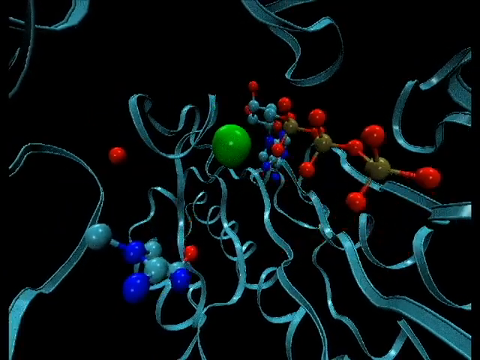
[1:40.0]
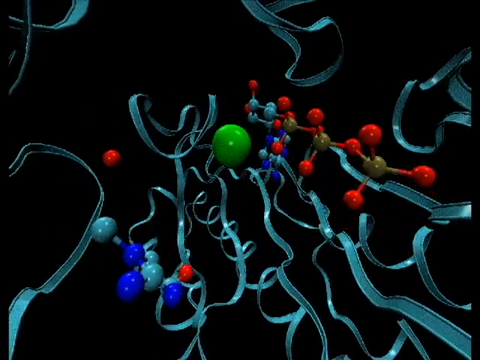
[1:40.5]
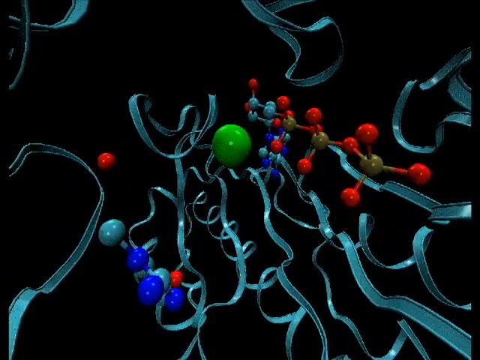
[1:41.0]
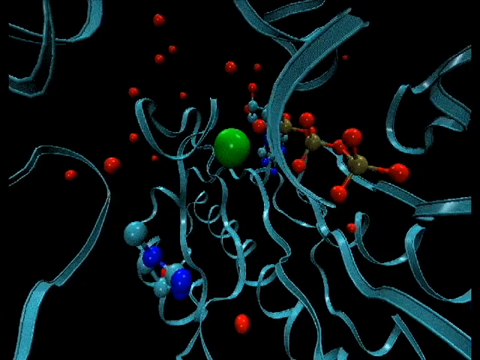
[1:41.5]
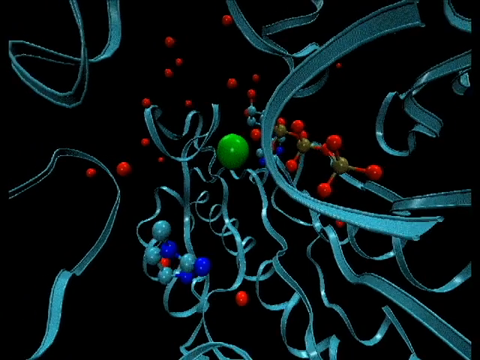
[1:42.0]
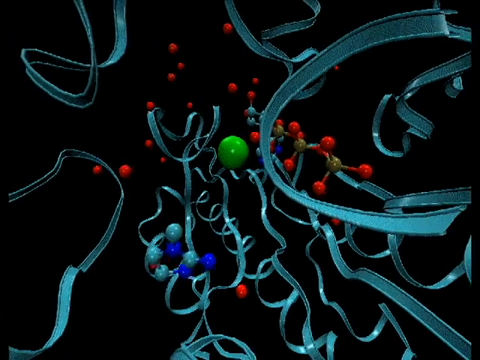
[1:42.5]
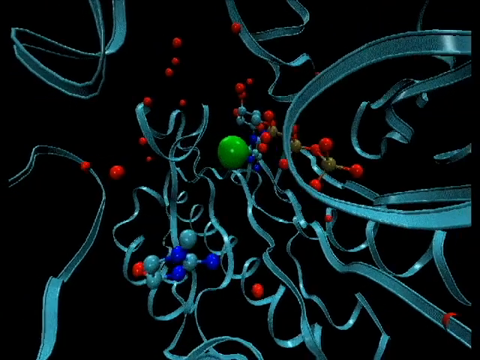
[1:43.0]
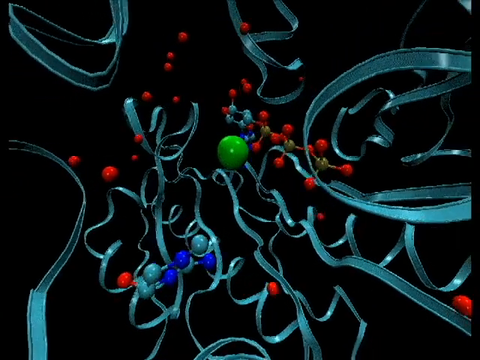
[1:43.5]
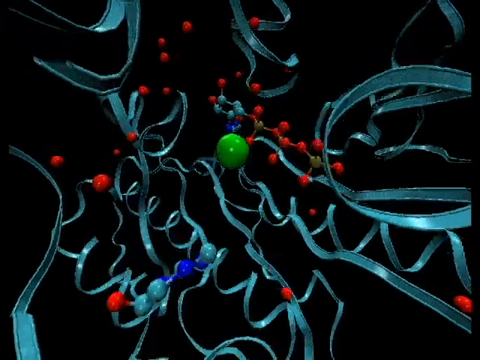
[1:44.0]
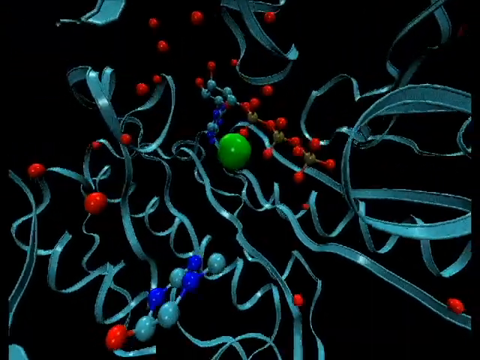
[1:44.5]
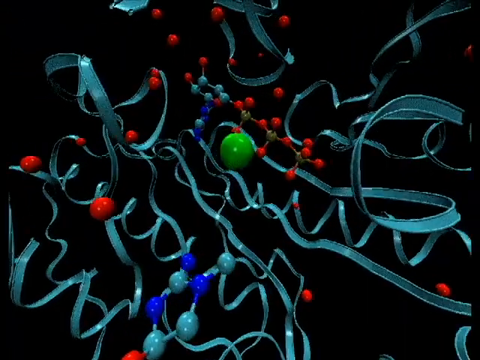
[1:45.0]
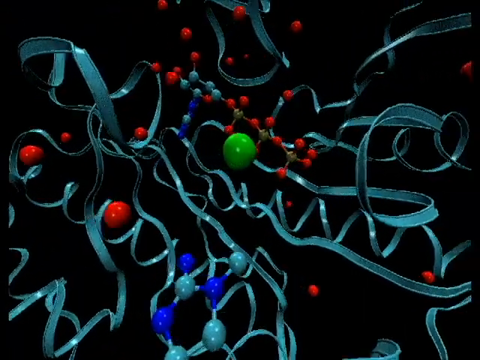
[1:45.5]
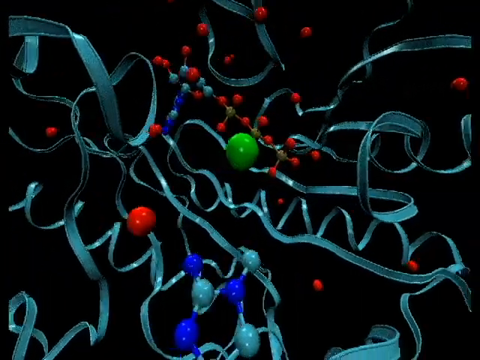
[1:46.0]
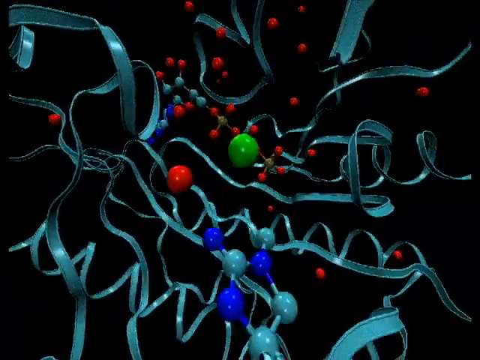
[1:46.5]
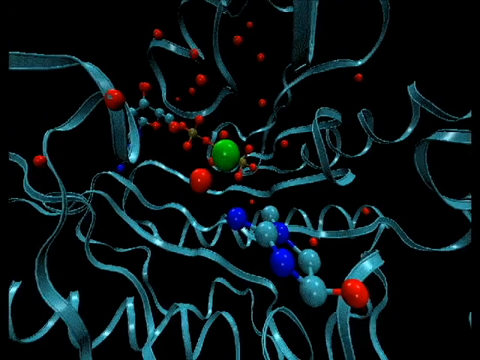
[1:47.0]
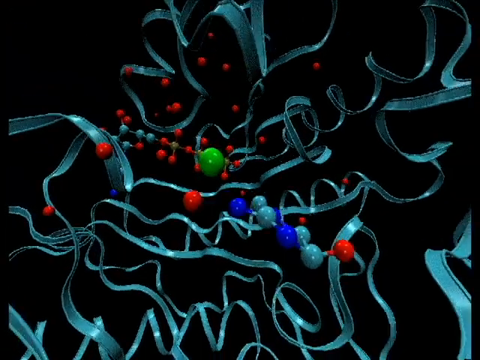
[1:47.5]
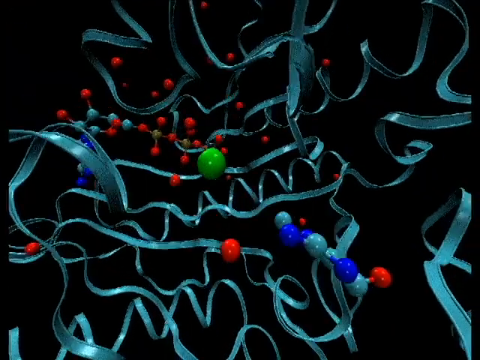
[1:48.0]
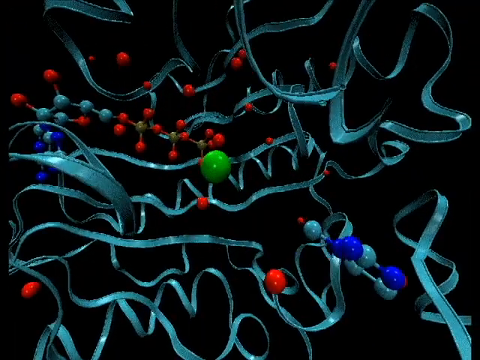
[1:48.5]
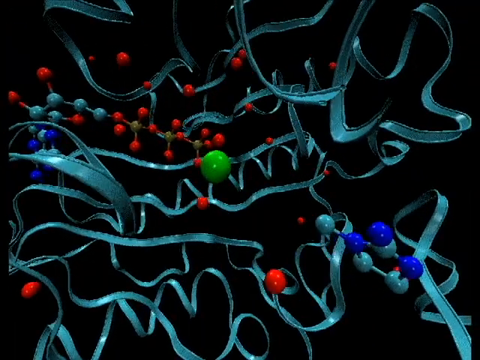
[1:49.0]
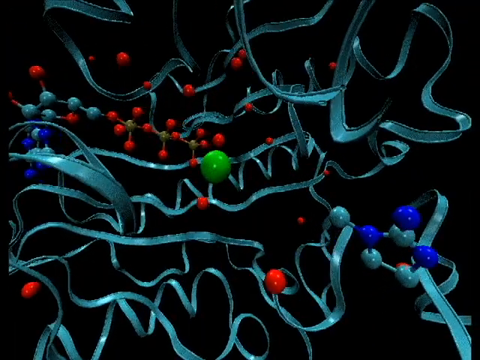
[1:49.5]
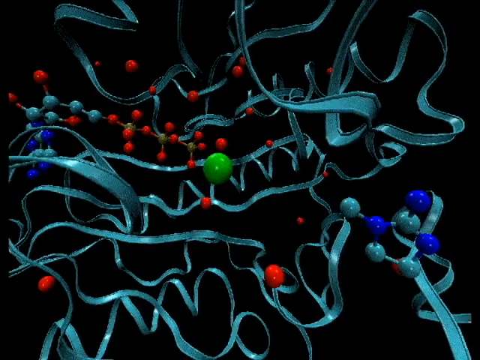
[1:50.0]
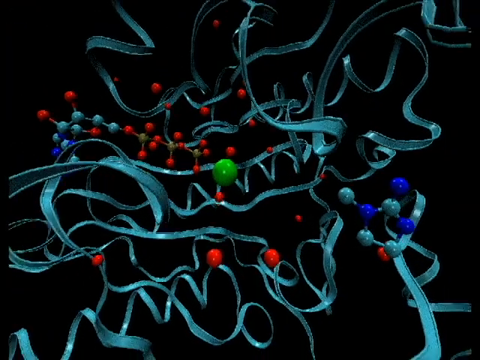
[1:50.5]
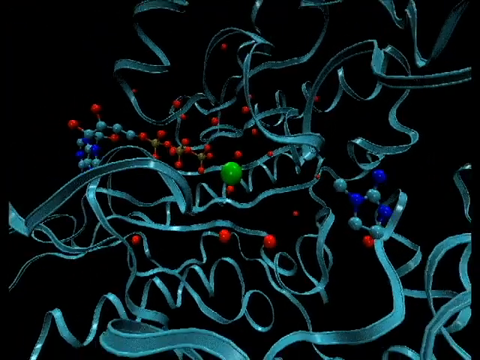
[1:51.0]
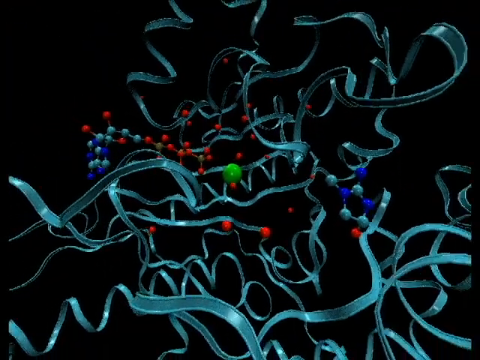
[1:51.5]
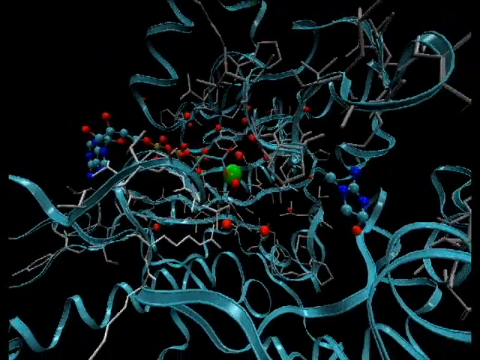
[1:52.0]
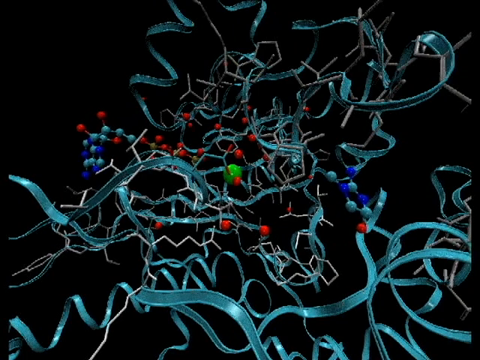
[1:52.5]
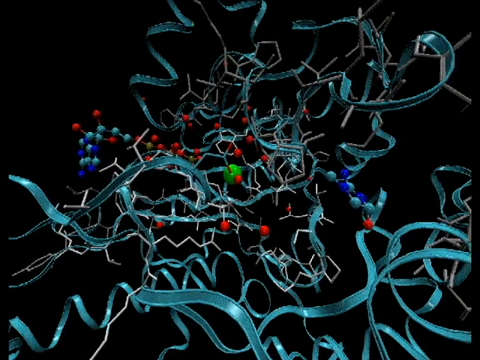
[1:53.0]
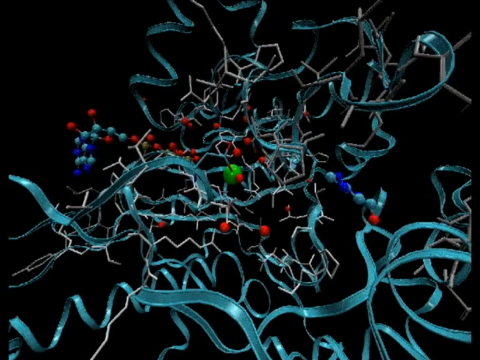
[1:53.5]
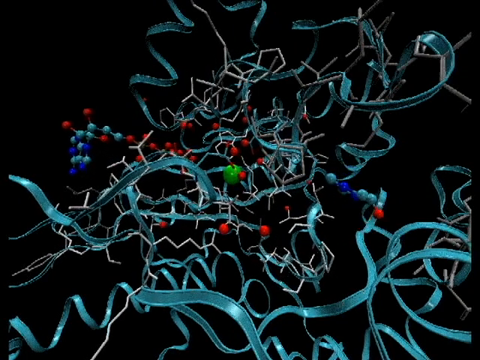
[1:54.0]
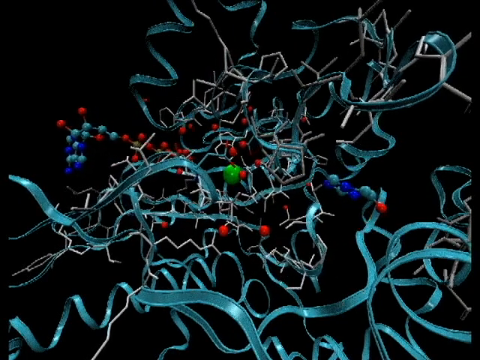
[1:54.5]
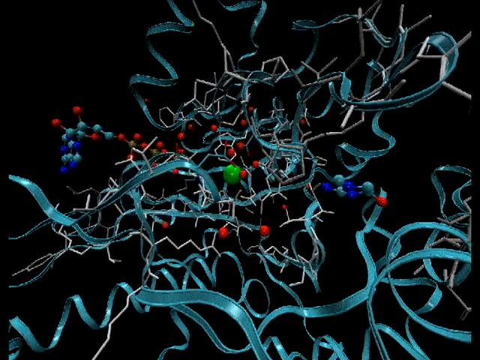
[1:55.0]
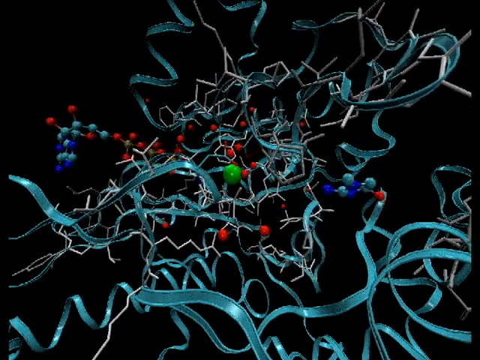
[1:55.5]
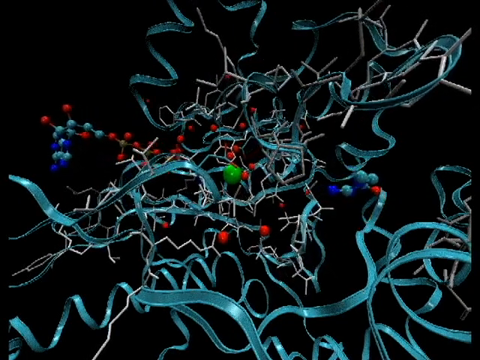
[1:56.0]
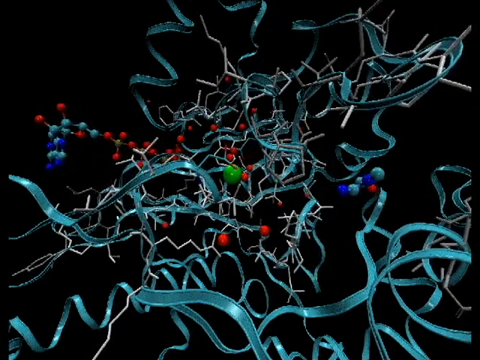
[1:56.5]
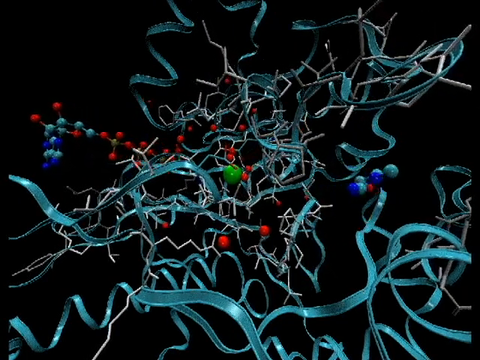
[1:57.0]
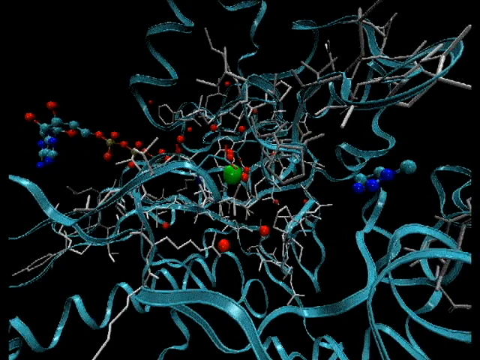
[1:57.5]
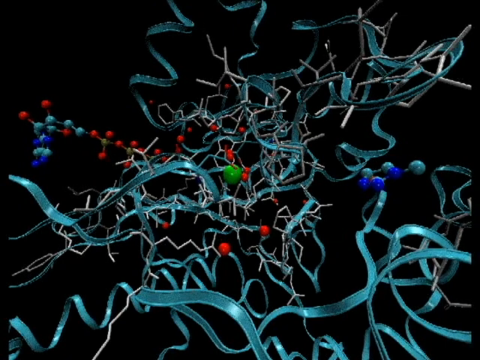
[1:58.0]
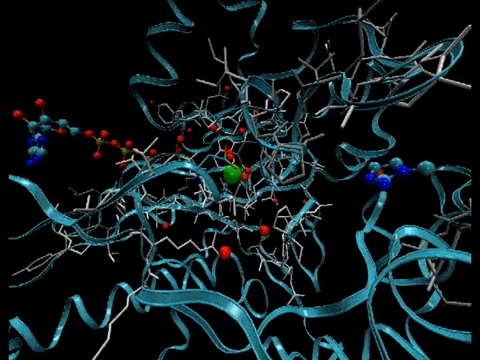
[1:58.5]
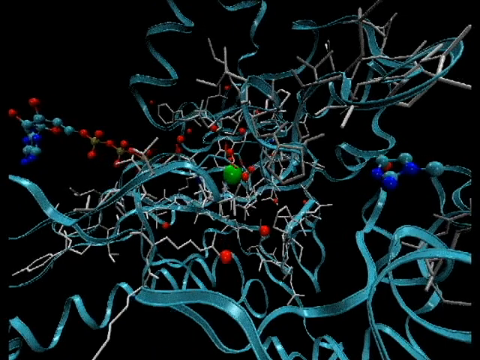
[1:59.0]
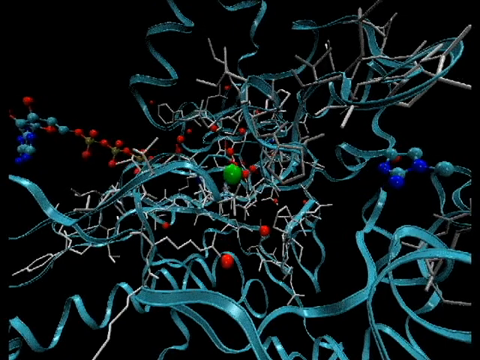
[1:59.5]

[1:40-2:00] A computer-generated 3D representation of the protein creatine kinase shows the individual ions, the molecular structure and the very complex three-dimensional shape of the molecule. It shows an area where a reaction is taking place with two other molecules, ADP and creatine phosphate, which are reacting with a magnesium ion, the focus of the video, demonstrating the interactions between that part of the molecule and the reacting parts of the other molecules. The magnesium ion is shown in green, and other ions, or possibly atoms, are shown in red or blue. The camera continually pans, showing the three-dimensional reaction from various angles. It zooms out and shows a sort of interwoven structure between the molecules, revealing the complexity of the protein's three-dimensional molecular structure.